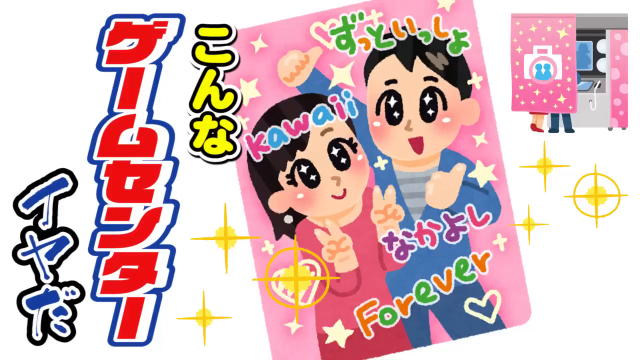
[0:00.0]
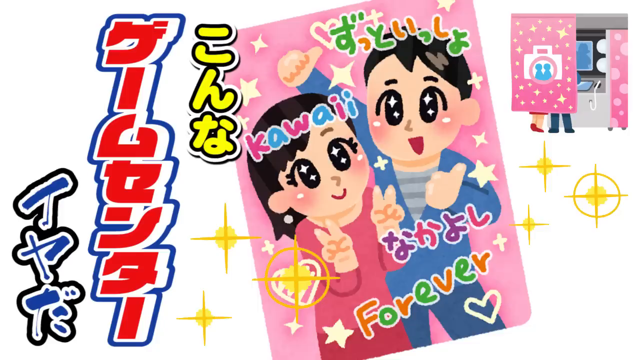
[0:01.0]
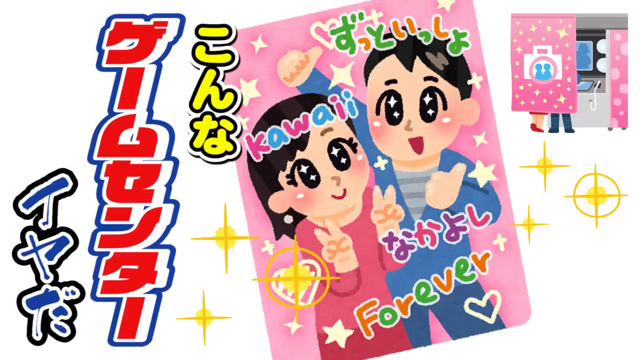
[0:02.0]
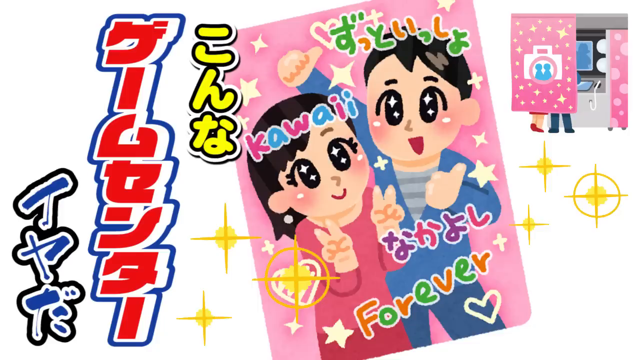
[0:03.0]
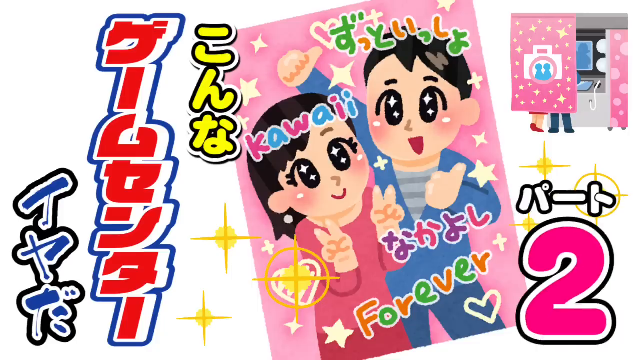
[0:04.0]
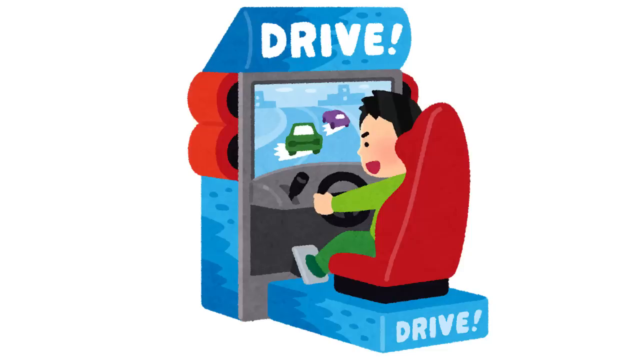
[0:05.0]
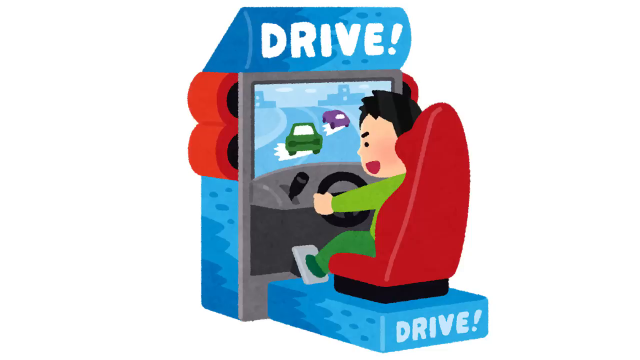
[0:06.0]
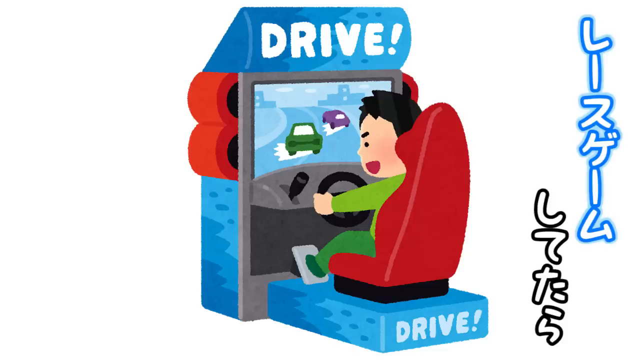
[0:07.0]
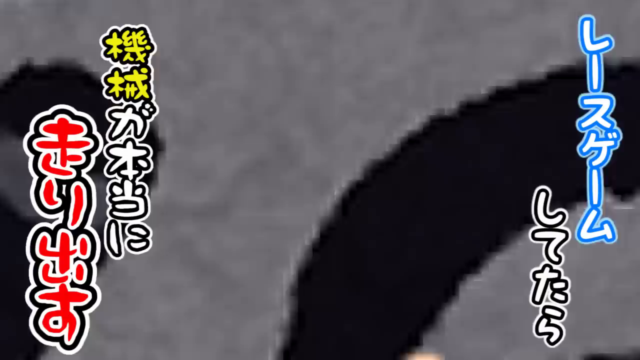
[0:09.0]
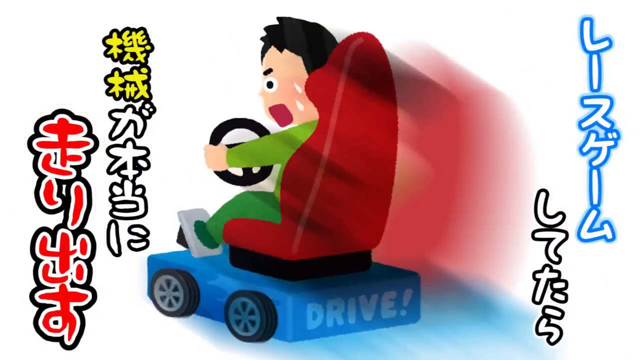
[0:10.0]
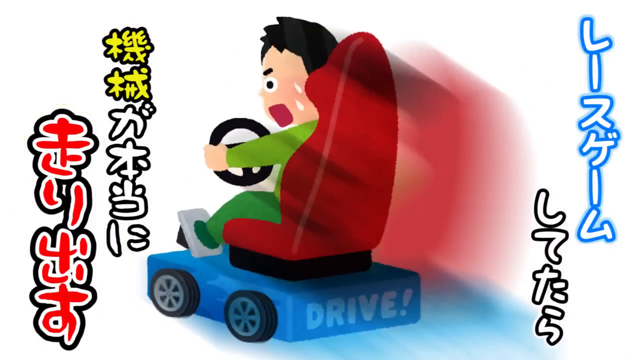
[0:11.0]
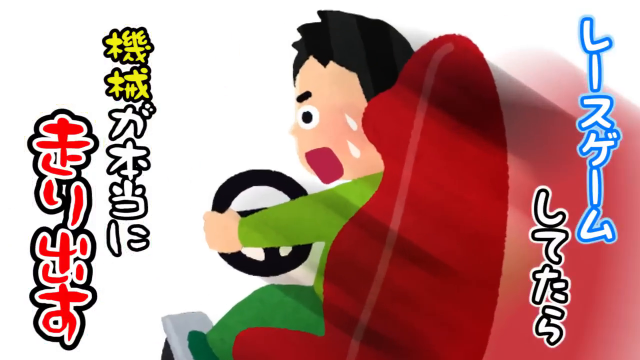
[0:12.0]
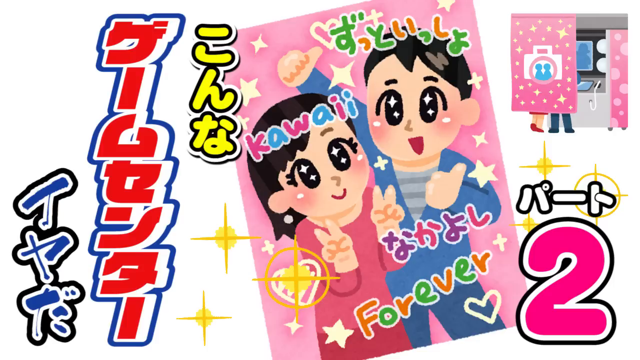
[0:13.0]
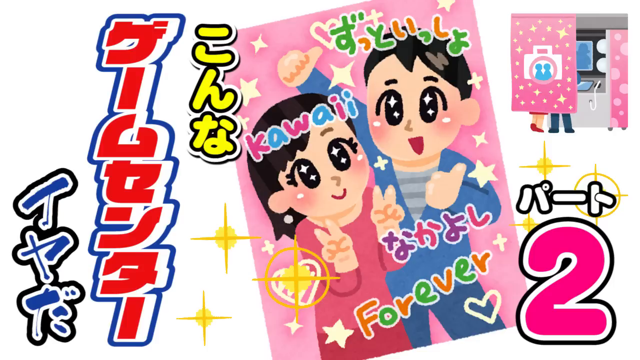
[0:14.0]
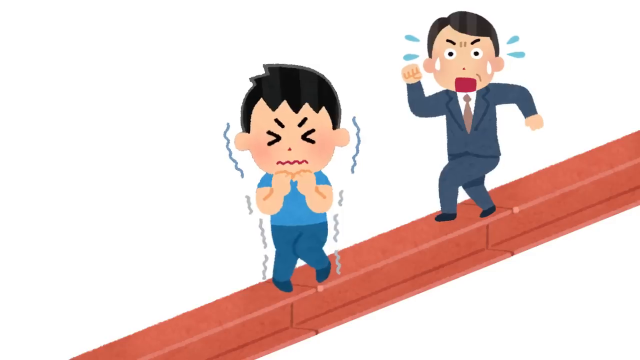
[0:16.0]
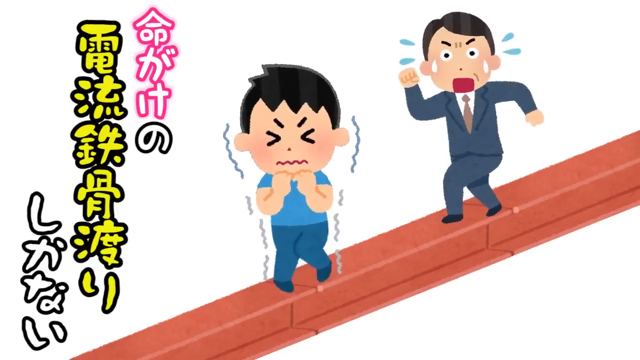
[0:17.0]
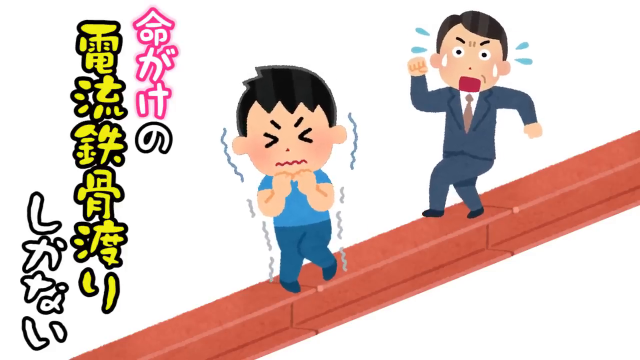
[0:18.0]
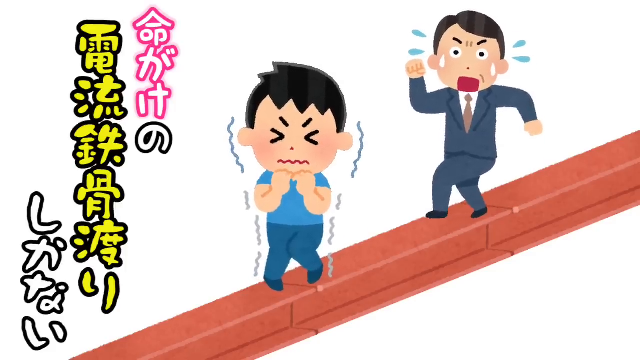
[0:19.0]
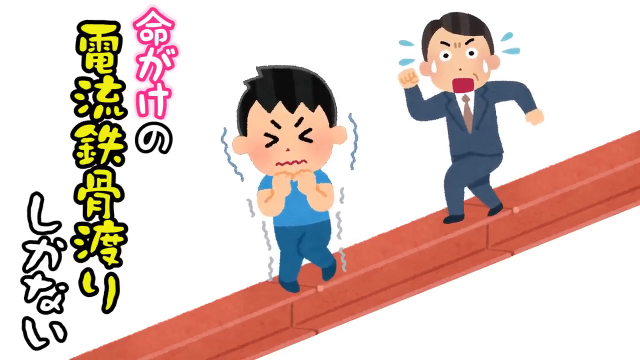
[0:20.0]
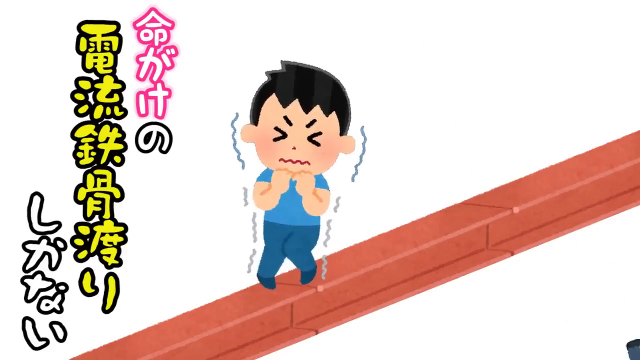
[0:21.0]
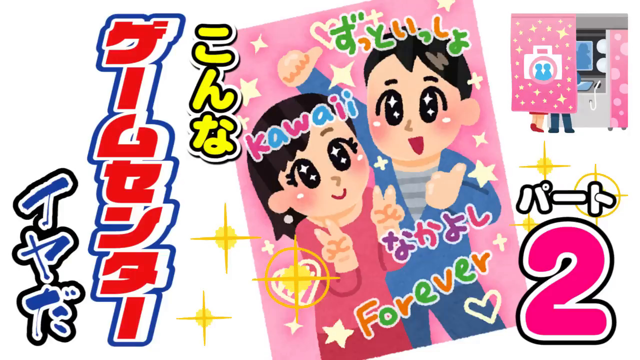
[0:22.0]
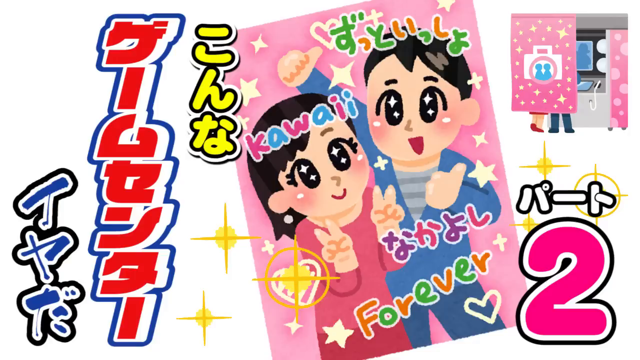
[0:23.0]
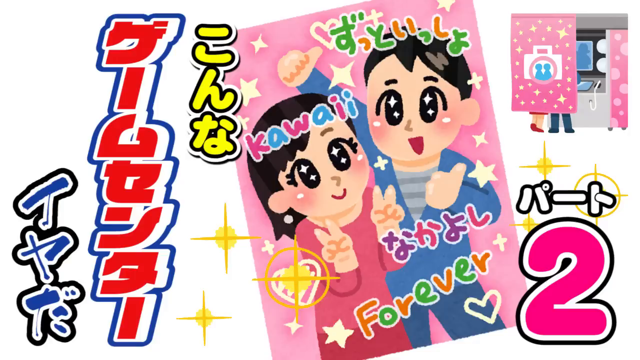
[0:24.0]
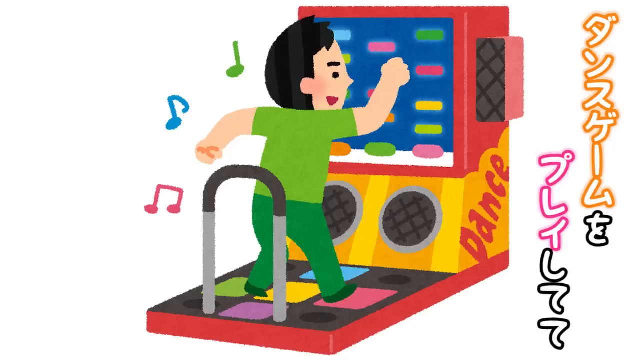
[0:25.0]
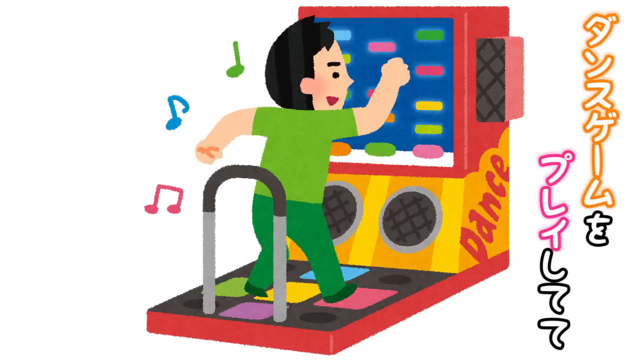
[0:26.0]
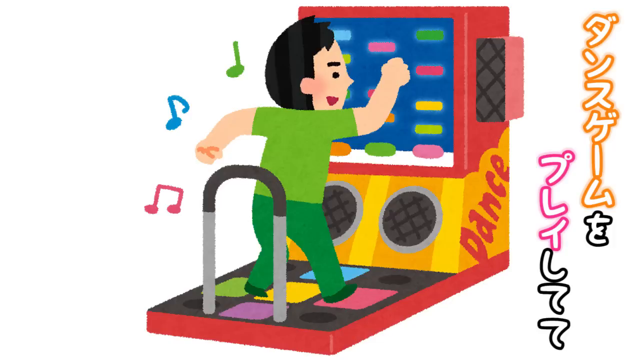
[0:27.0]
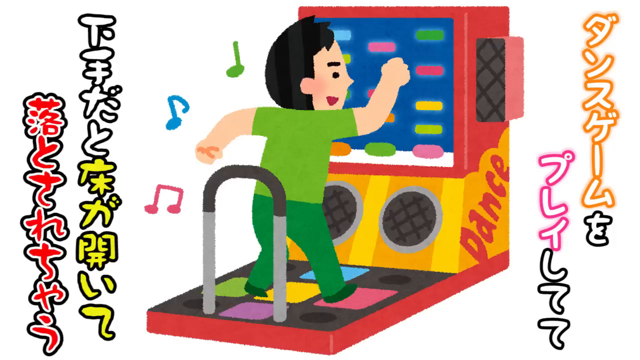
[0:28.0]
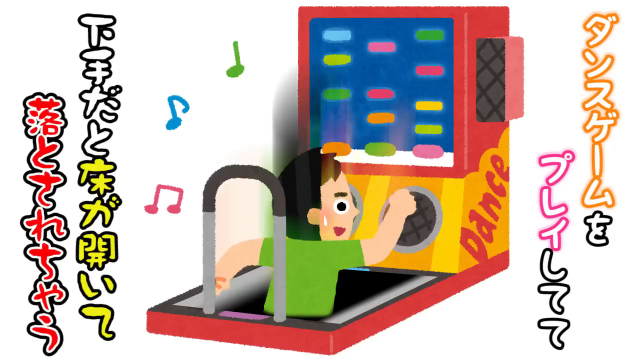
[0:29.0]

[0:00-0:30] The video appears to be some sort of Japanese advertisement. It opens on a pink poster with a simple cartoon drawing of a Japanese man and woman, with the words "kawaii forever" and a lot of Japanese lettering. On the left-hand side there is blue, red and yellow text running vertically, and on the right-hand side there appears to be a drawing of a photo booth in the background. It cuts to a man in a green shirt and green pants playing a driving arcade game with "drive" written in white across the top. The game has a blue body, a red racing chair and some red accents on the side, and Japanese lettering runs roughly vertically on both sides of him. Sitting in the chair, he looks anxious, with cartoon sweat bullets and his mouth open. The original poster scene is shown again, now with a big red 2. A man with his eyes crossed, looking upset, wearing a blue t-shirt and blue pants, is standing on what looks like a red concrete ridge. Behind him a businessman looks anxious, with two sweat bullets on his face and a couple coming off his sides. The original poster with the big 2 on the side appears again and stays for a few moments. Then the man in green is seen playing a Dance Dance Revolution game, which has a big screen with red and yellow colored bars and the classic five-piece dance pad. A close-up shows him looking as if he has fallen halfway through the dance pad, with a stress dot and more Japanese text.